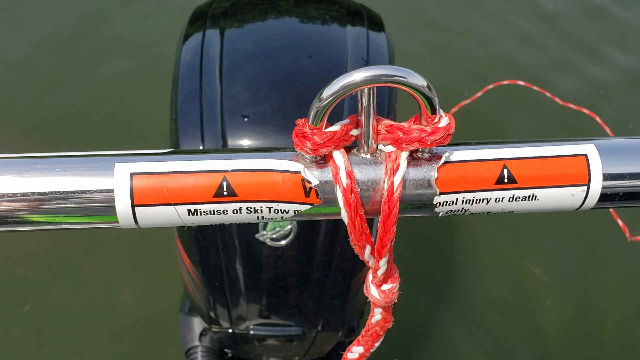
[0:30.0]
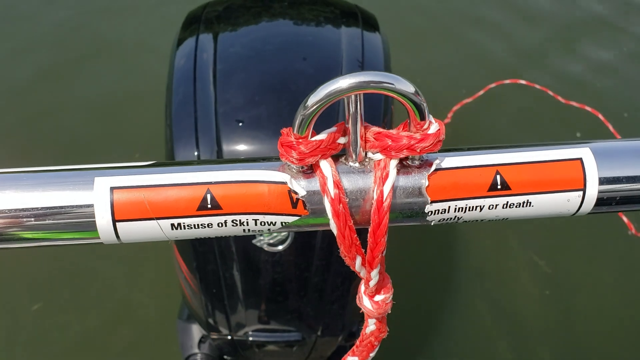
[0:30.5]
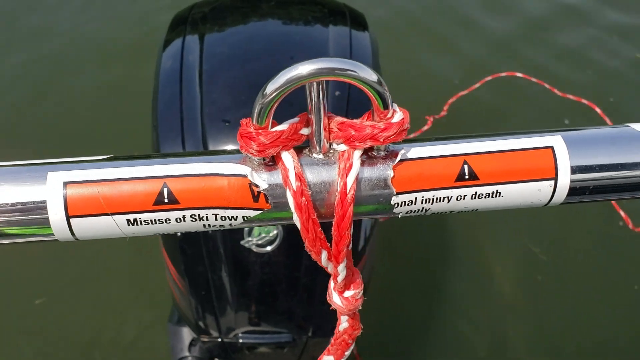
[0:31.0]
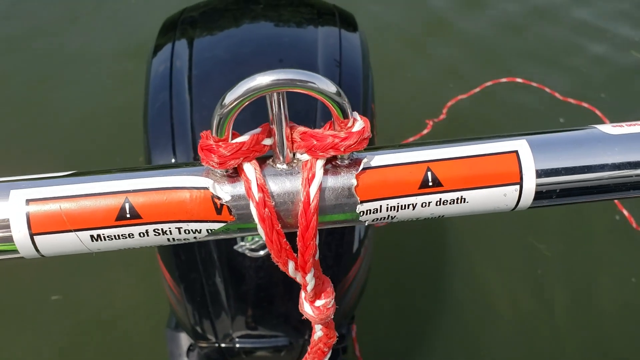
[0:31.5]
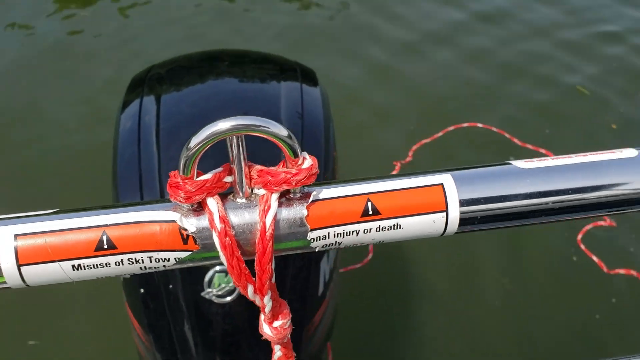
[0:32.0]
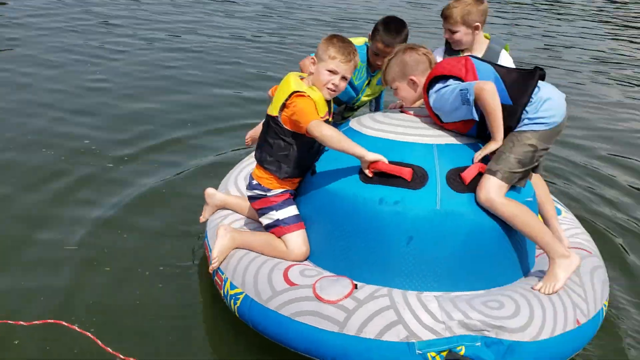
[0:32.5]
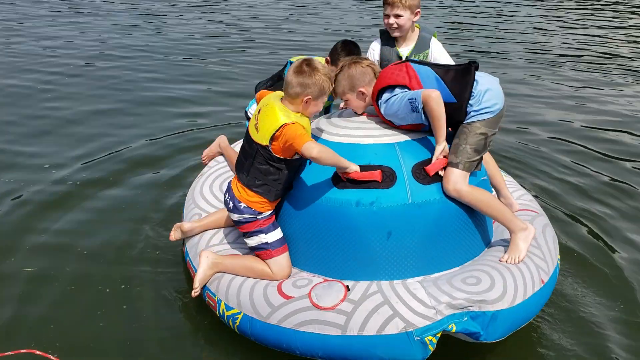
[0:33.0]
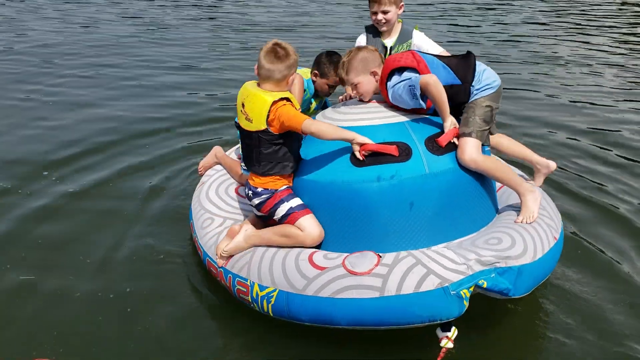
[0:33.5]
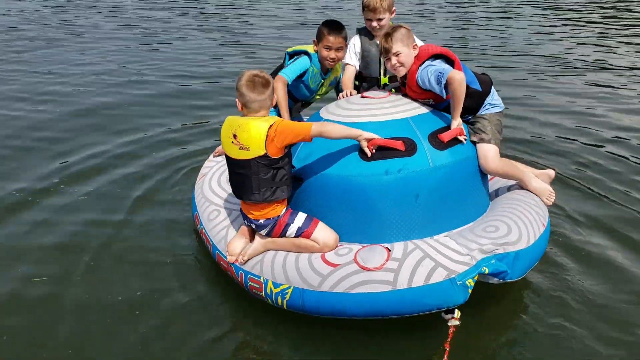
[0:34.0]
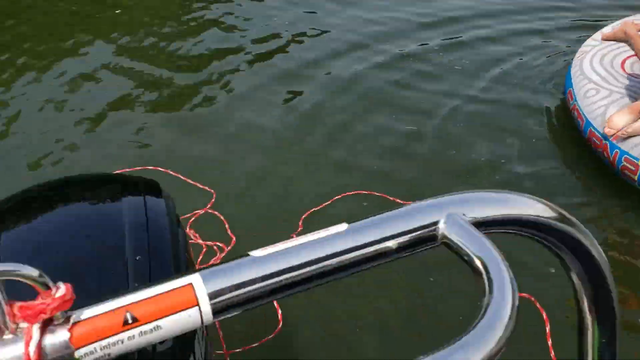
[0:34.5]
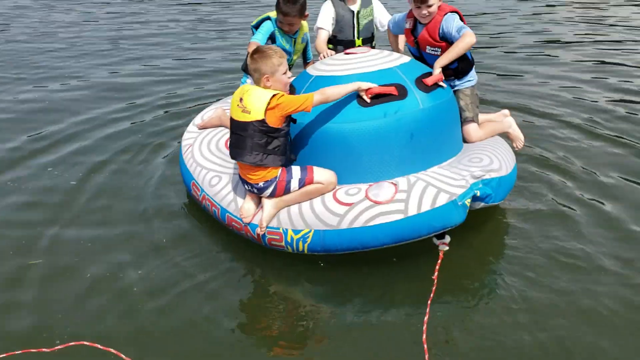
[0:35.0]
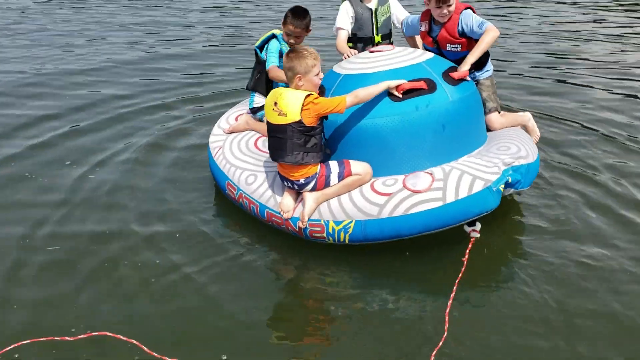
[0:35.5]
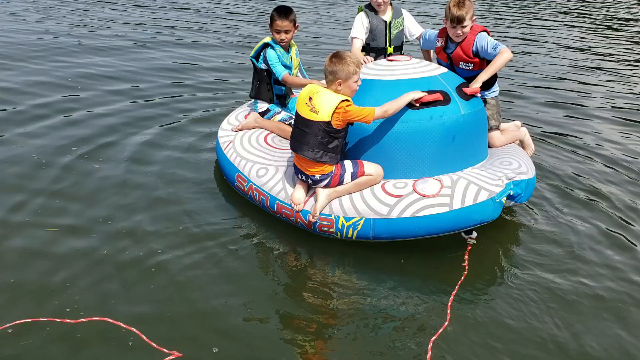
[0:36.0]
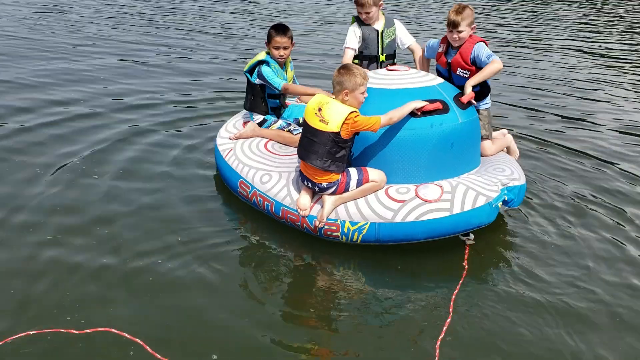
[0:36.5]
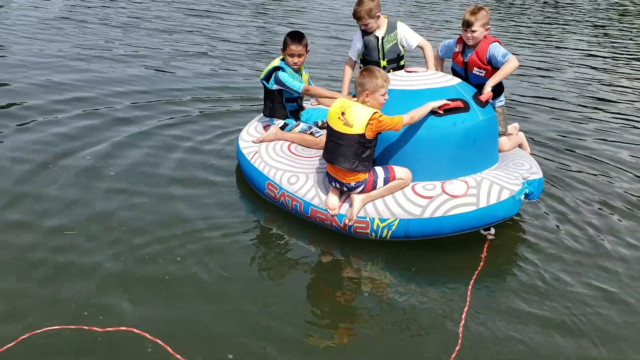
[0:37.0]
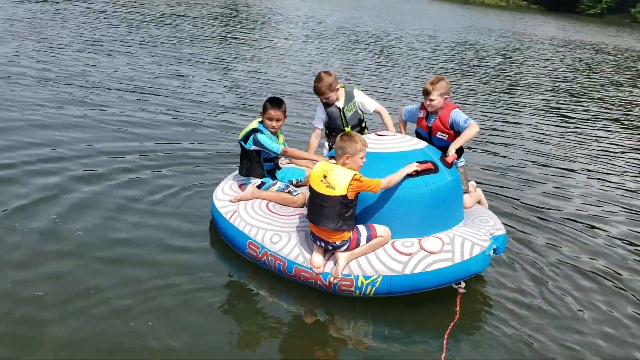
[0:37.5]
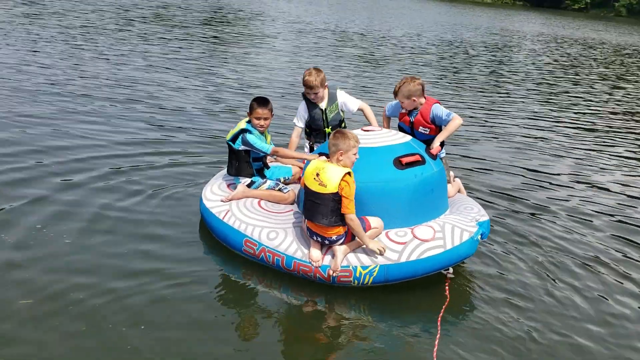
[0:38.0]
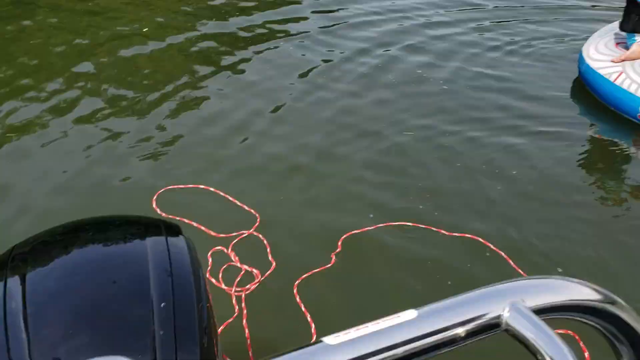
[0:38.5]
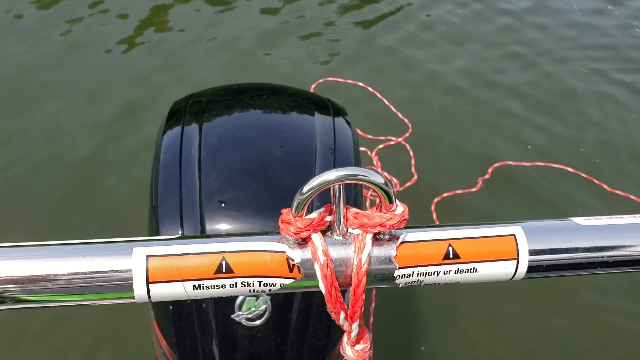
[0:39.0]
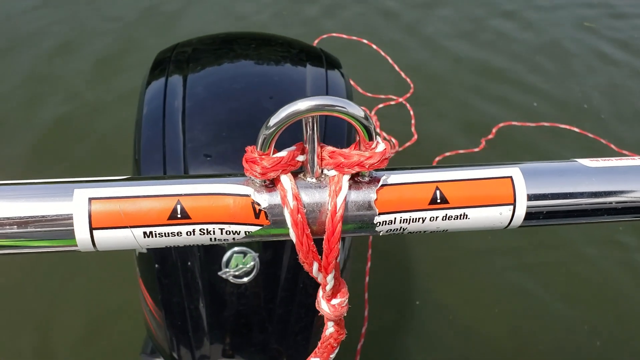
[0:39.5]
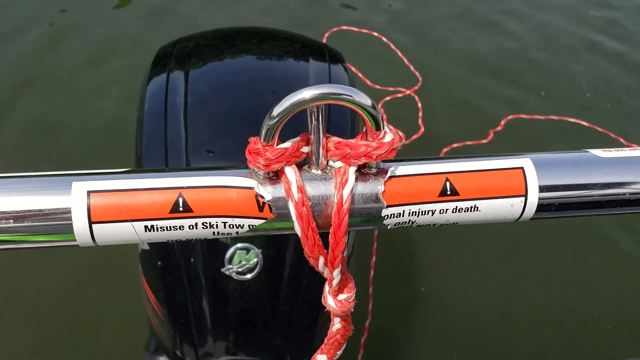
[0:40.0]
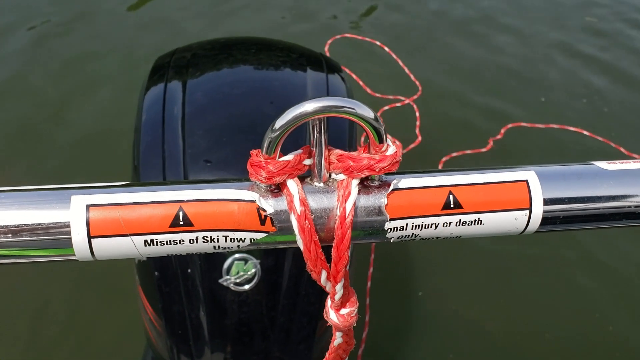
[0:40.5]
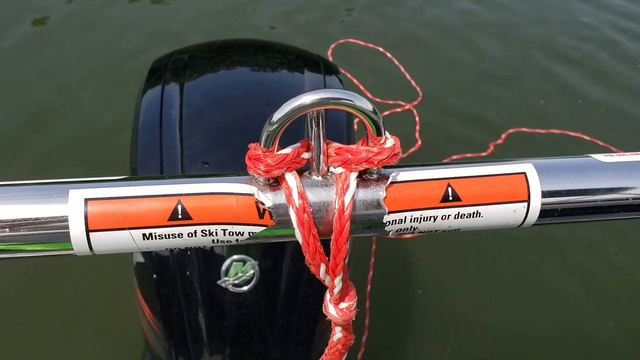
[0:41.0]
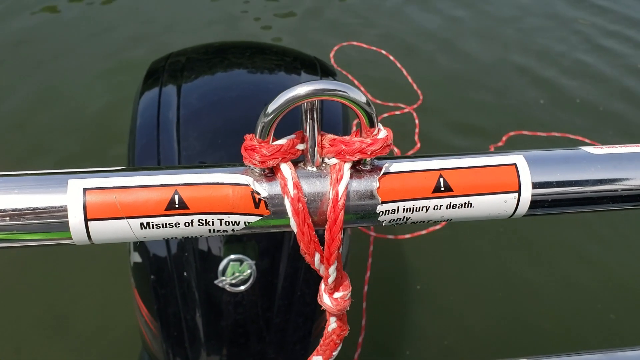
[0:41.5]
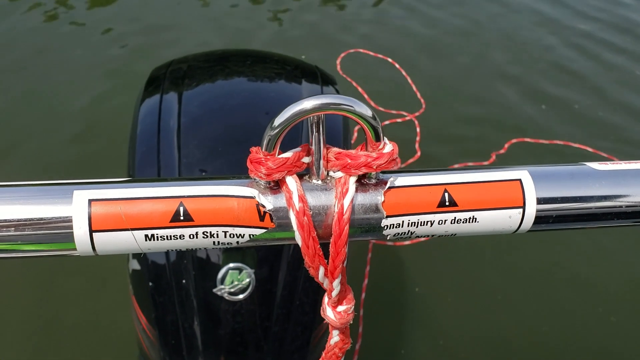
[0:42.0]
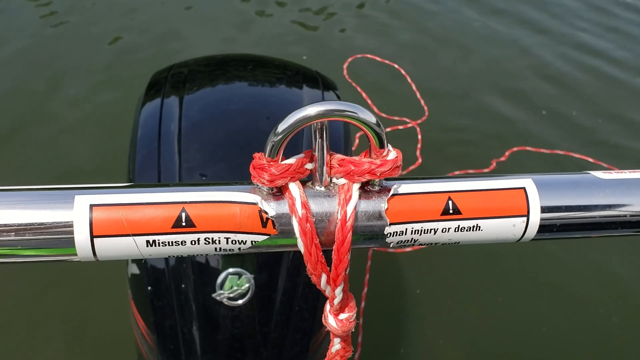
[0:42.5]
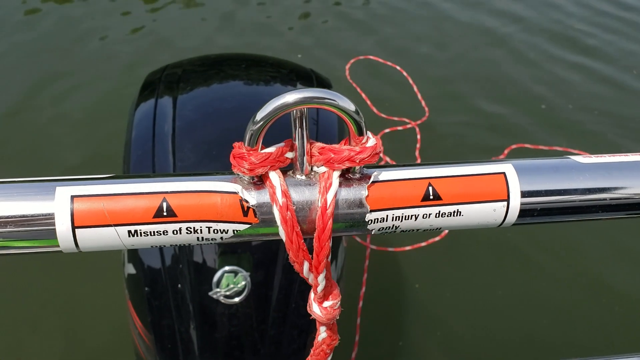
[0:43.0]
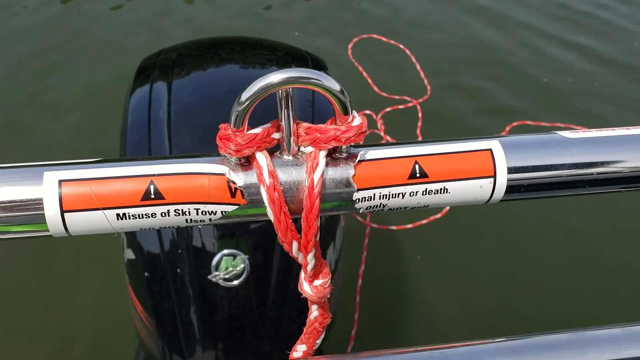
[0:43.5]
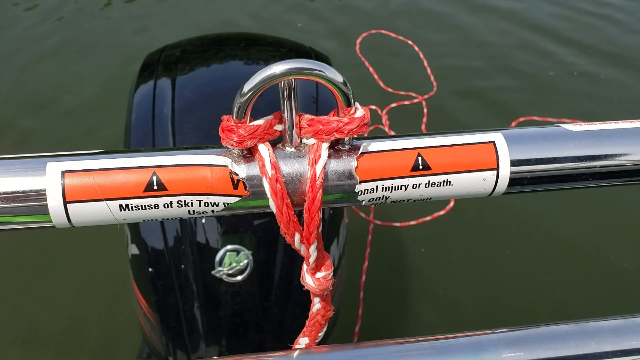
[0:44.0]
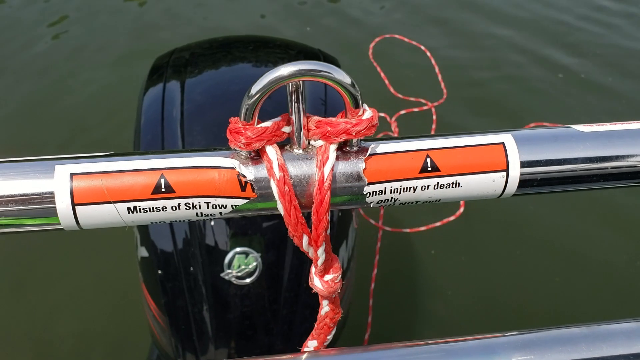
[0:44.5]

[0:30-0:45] In a first-person recording, a man stands on a motorboat. He has tied a frayed red and white rope to a metallic bar at the end of the motorboat, and the rope descends into the water, twisting and turning along the water's green surface. The bar has a warning label that has been ripped in half; what remains shows a white sheet of paper with an orange header bar at the top bearing a caution label that looks like a black triangle with a white exclamation point. Beneath the metal bar is the boat's large black motor, which sits in the water. The man pans the camera to the right, revealing that the boat is attached to a small blue inflatable raft with four children on it, each wearing a life vest; the man is apparently going to pull the raft with the rope. He shows that the boat and the raft are attached by the rope, then pans the camera back to the place on the boat where the rope is attached.